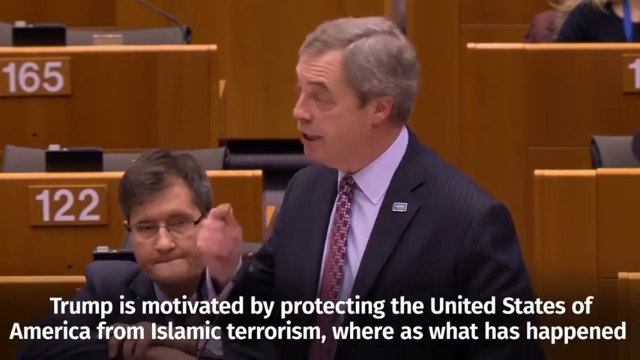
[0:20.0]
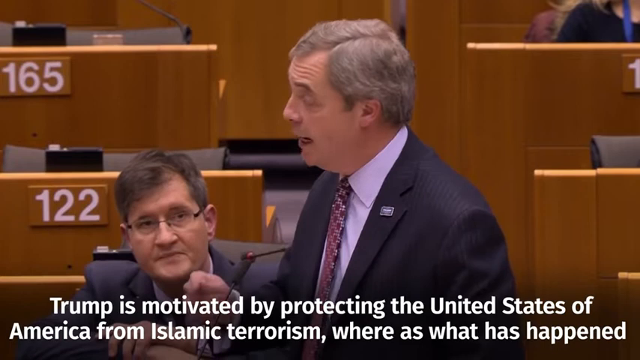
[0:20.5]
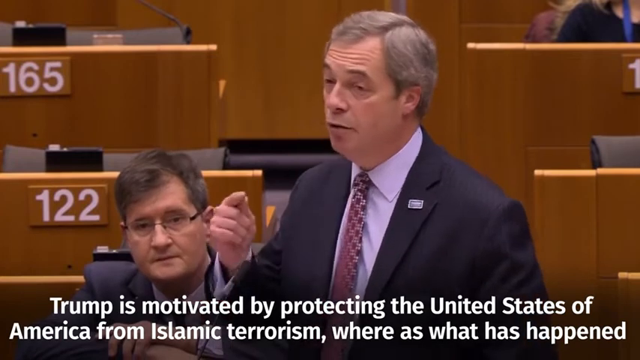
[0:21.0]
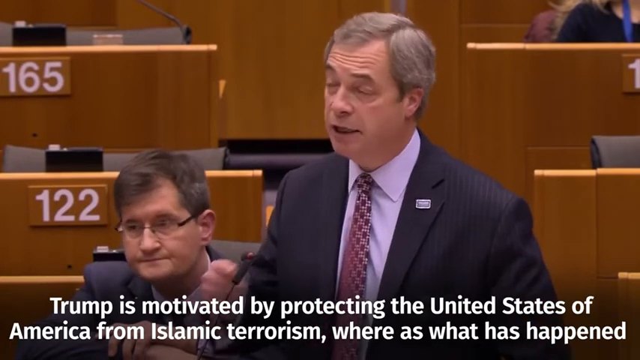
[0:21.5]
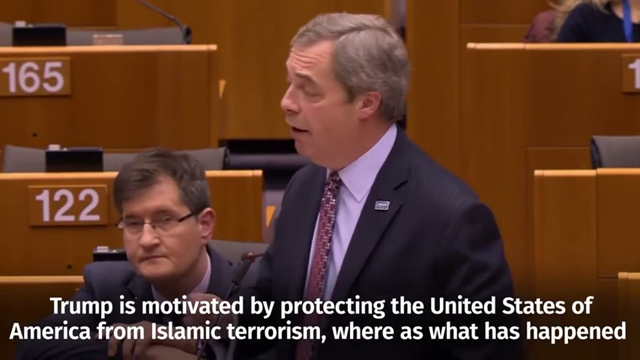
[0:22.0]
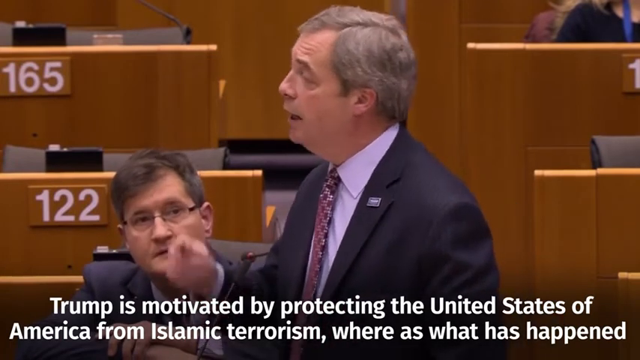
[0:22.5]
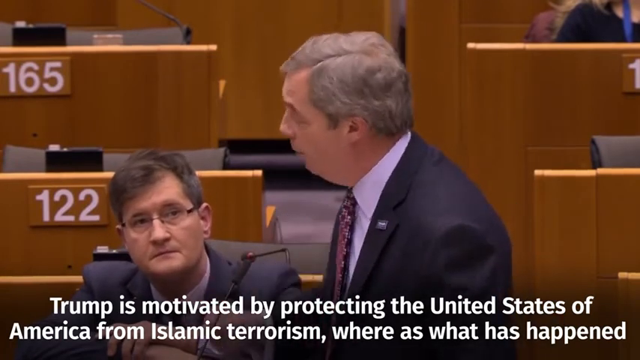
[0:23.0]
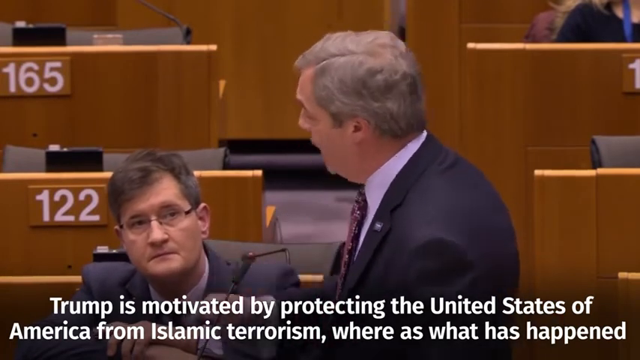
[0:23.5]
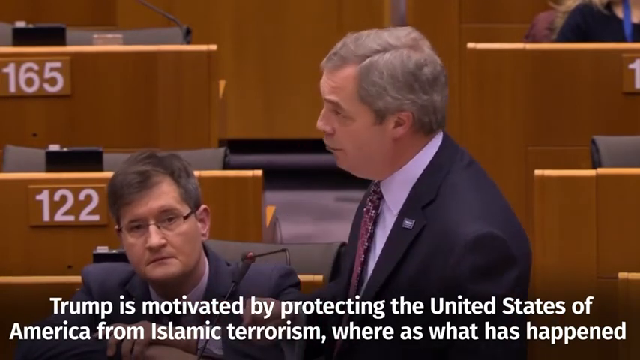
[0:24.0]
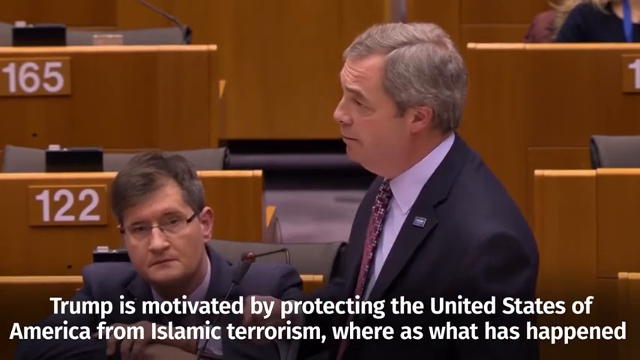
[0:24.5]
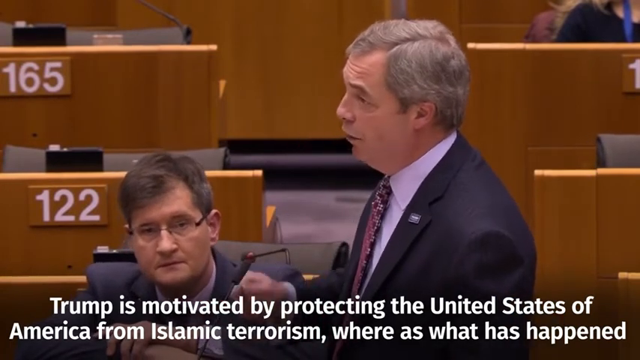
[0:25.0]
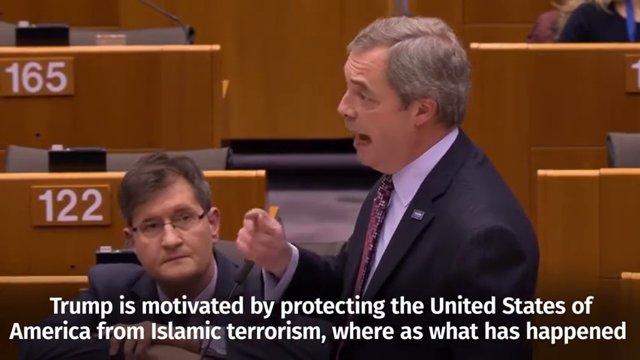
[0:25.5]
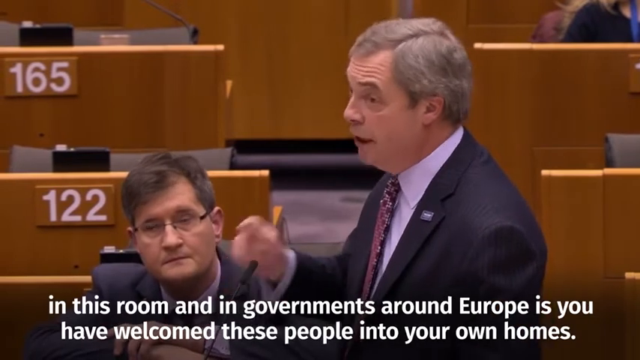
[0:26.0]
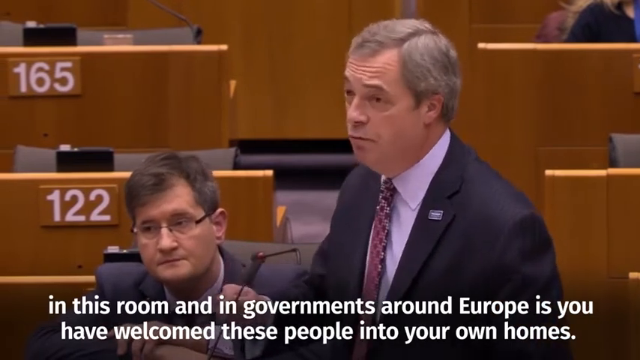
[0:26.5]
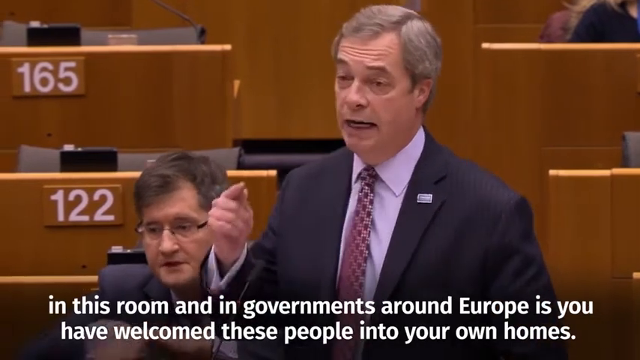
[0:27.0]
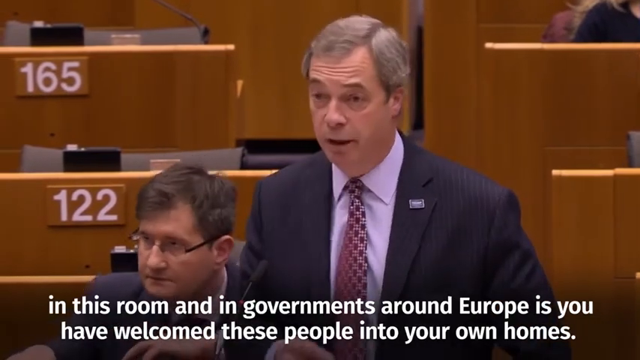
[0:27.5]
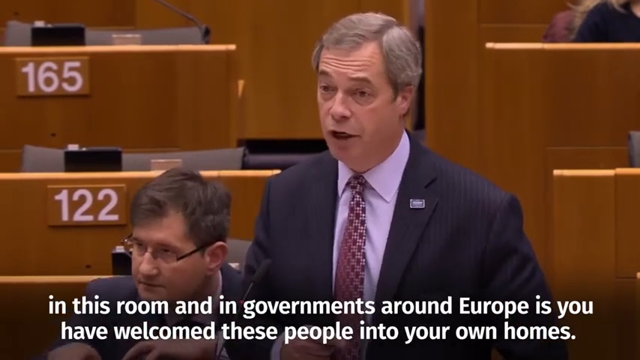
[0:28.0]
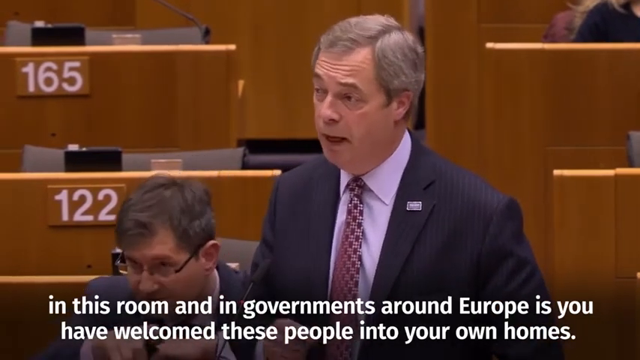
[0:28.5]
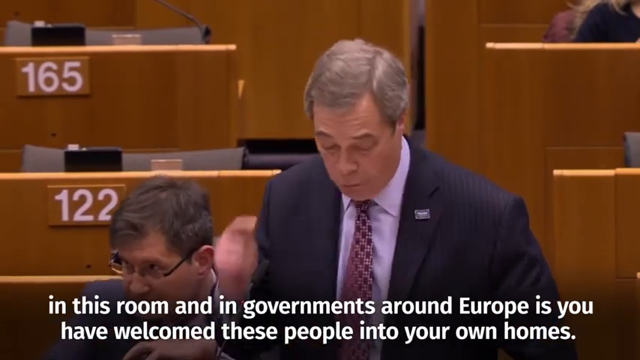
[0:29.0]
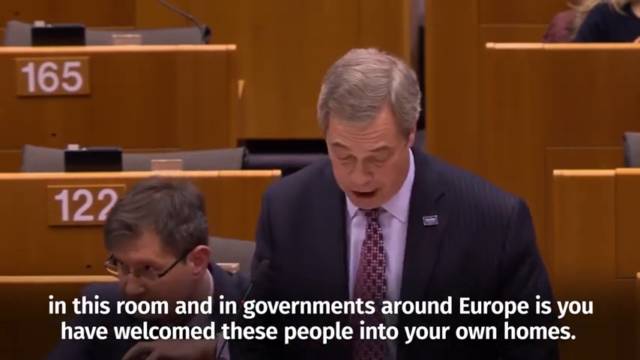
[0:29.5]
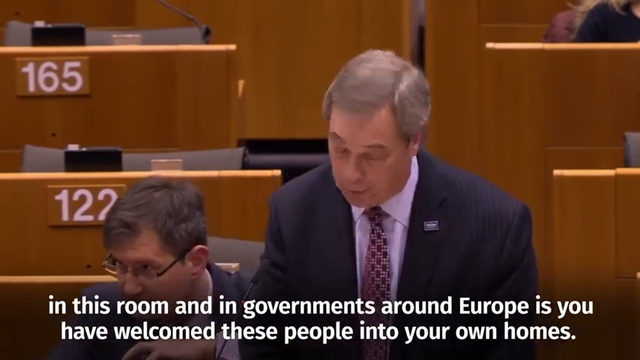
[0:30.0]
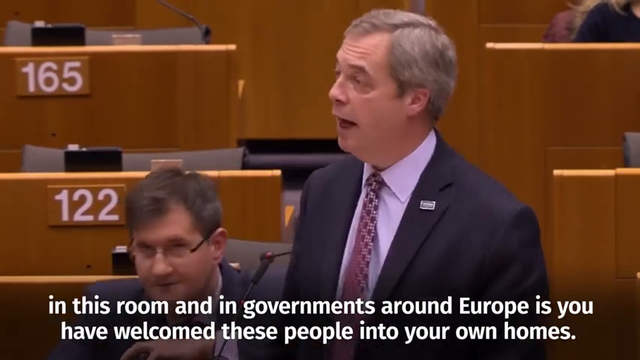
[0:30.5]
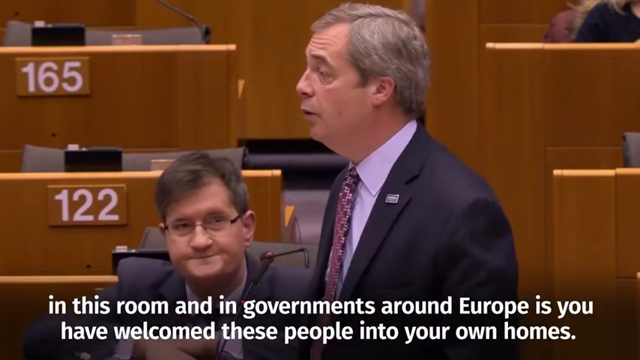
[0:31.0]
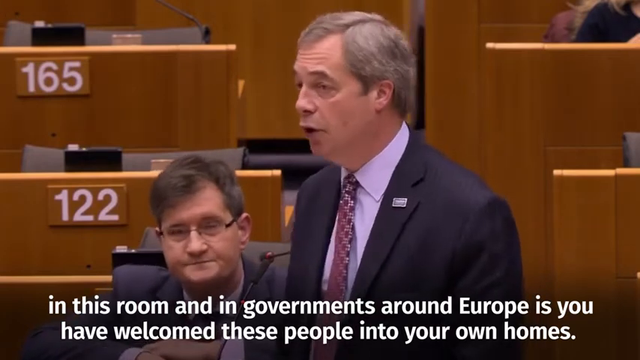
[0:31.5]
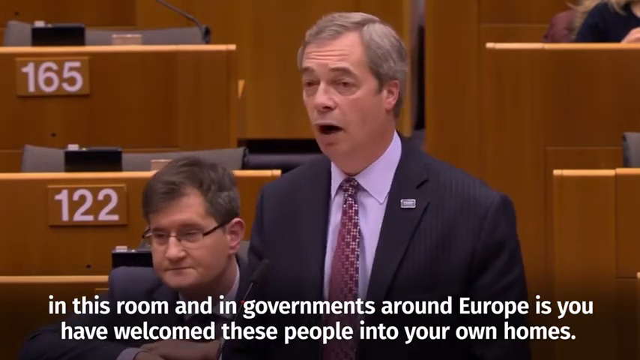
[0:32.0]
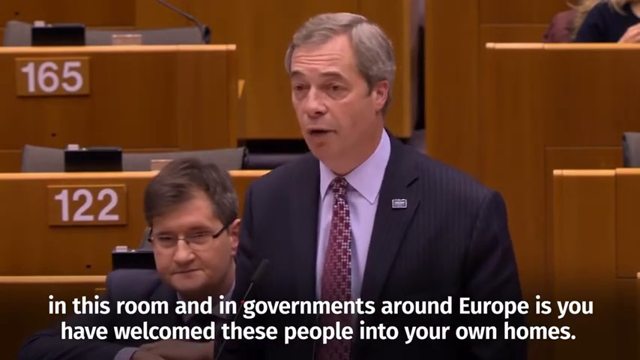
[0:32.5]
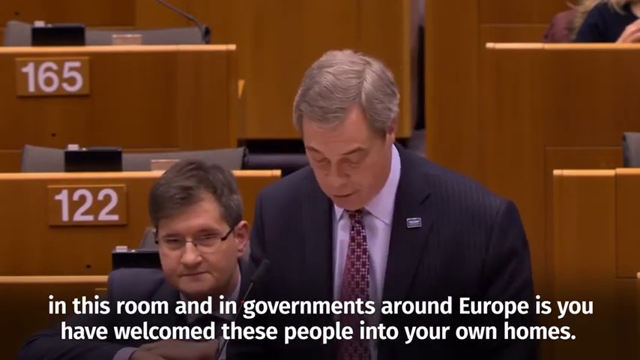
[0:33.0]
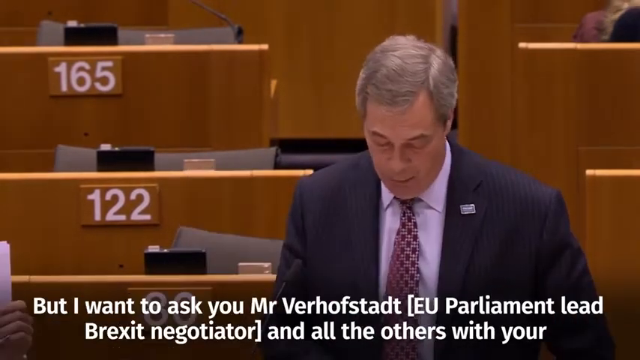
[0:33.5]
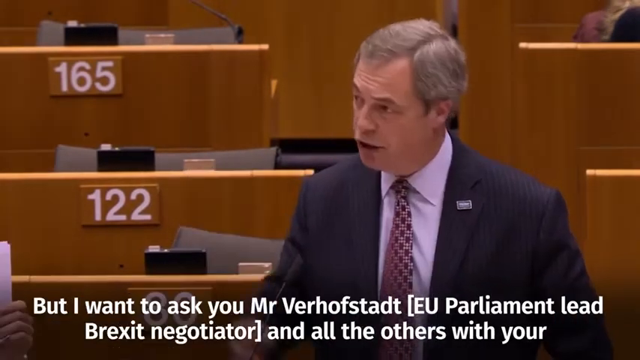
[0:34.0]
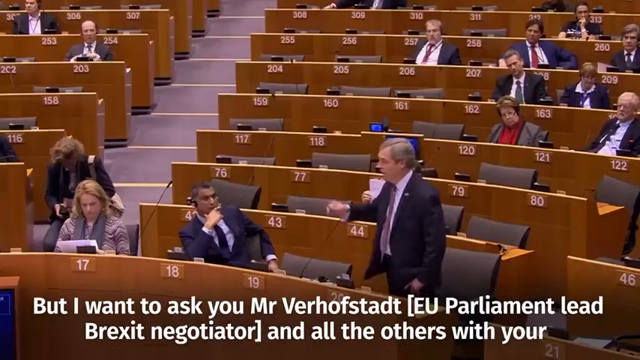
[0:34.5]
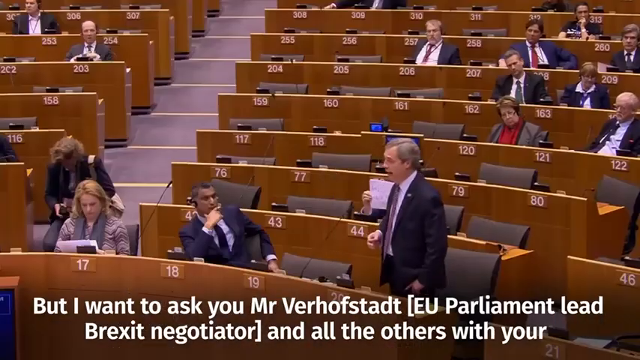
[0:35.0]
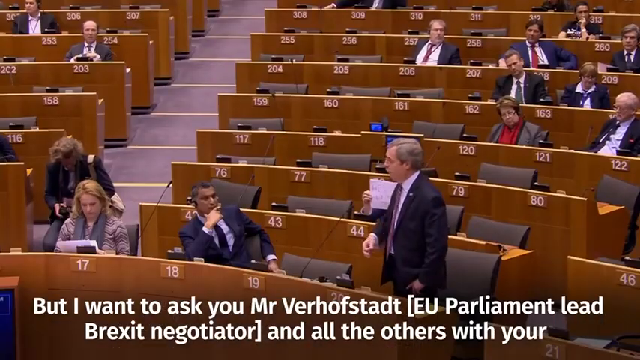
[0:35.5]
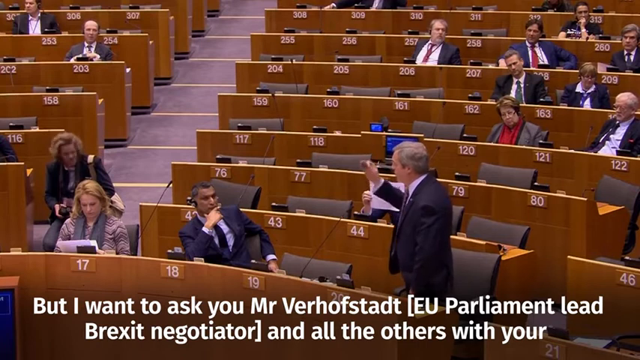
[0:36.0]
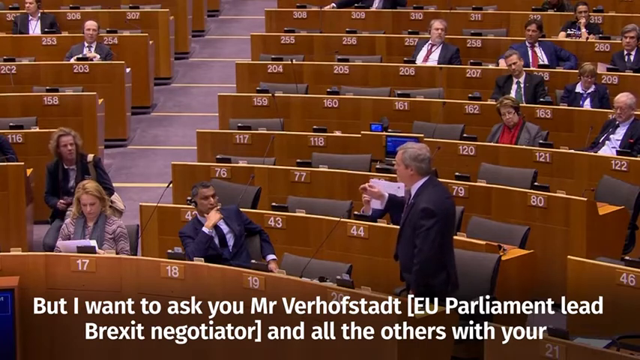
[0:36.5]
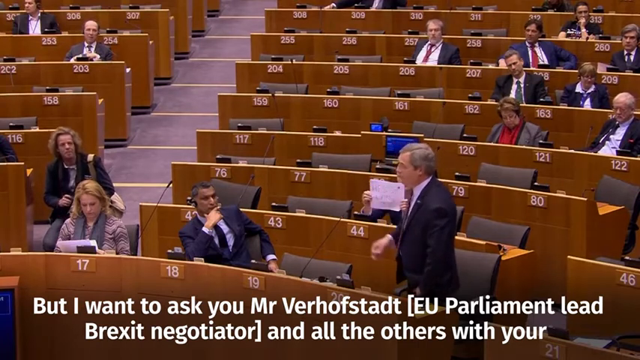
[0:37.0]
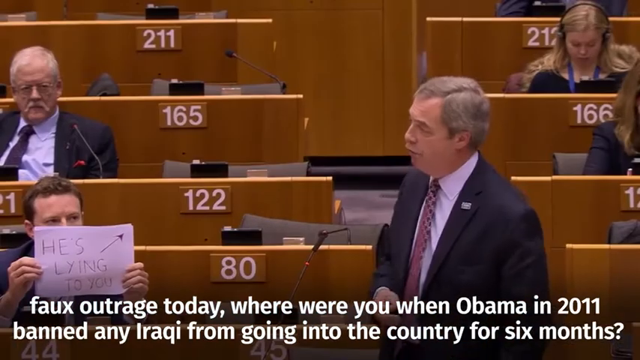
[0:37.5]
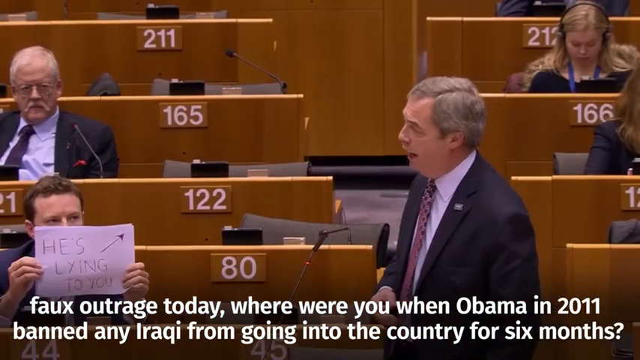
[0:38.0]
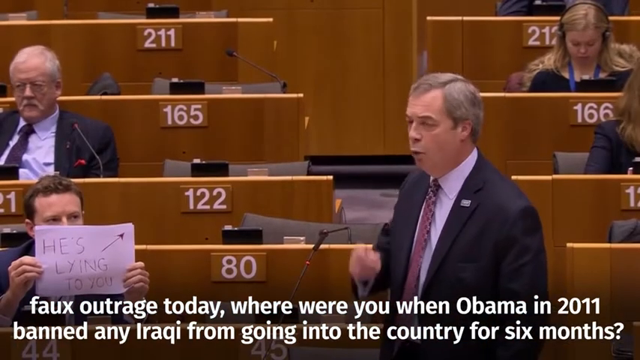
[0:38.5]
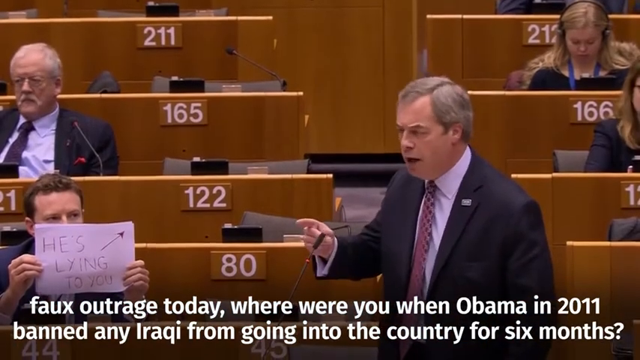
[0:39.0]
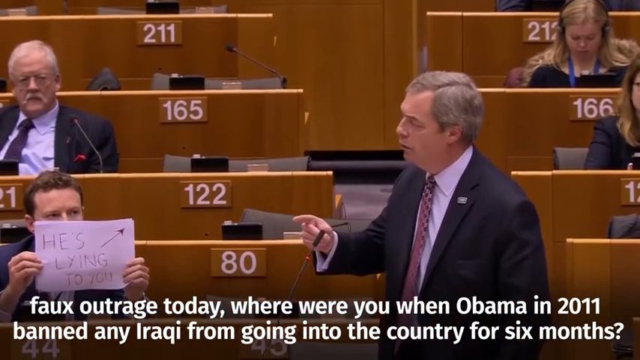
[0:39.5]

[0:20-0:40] A man in a black suit gives a speech while people in the background sit, watching and listening, in a government room. Different colors are visible, and numbers are written in the background: 165 and 122.